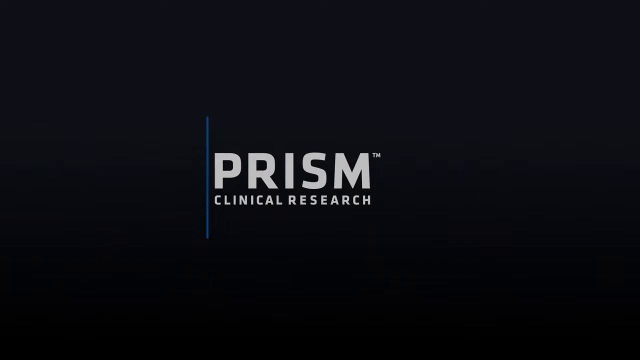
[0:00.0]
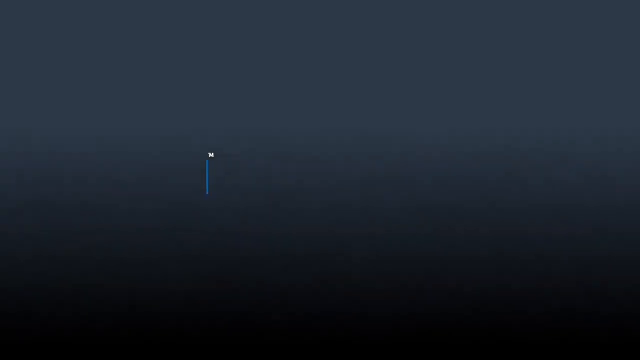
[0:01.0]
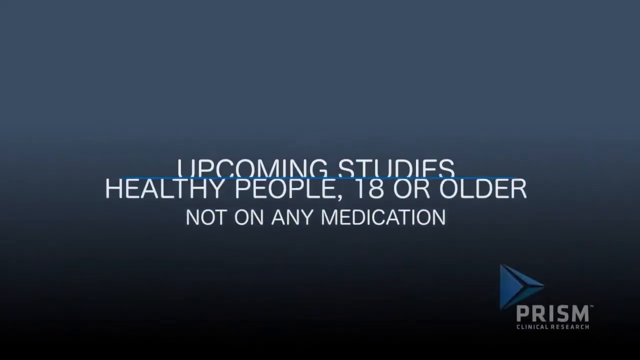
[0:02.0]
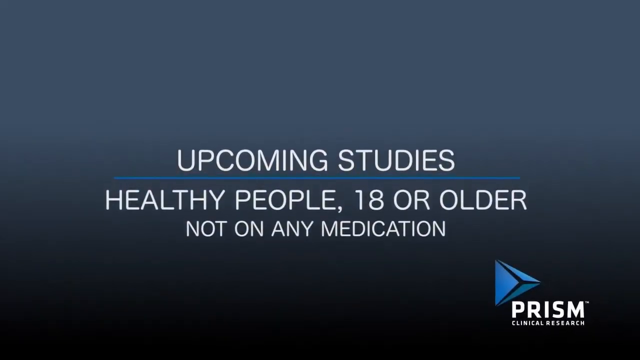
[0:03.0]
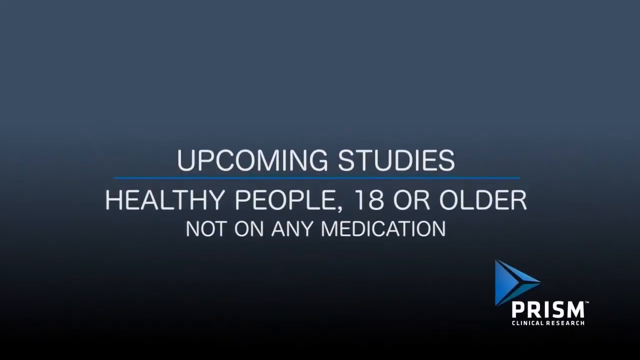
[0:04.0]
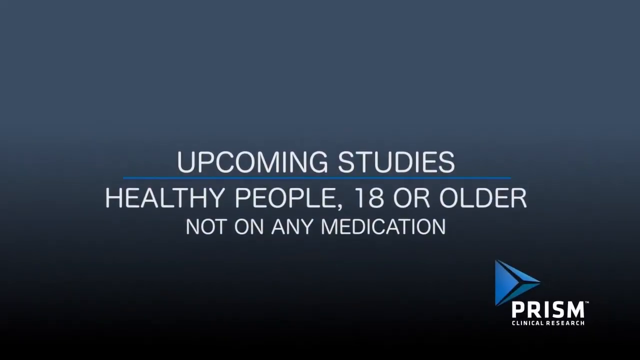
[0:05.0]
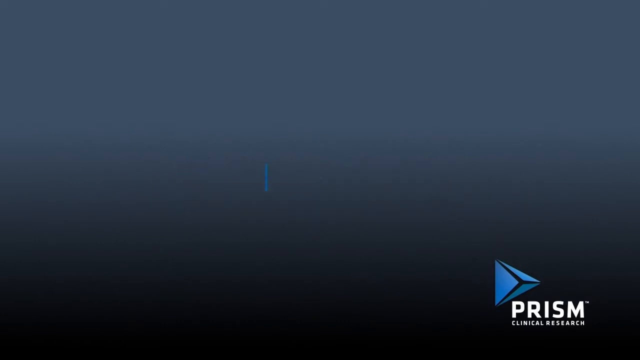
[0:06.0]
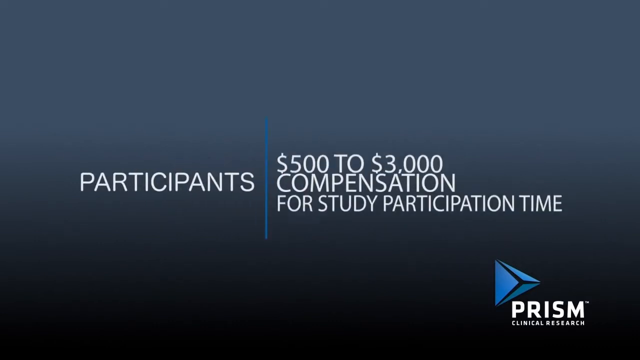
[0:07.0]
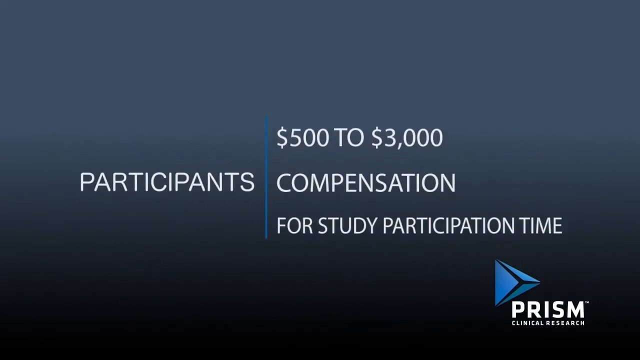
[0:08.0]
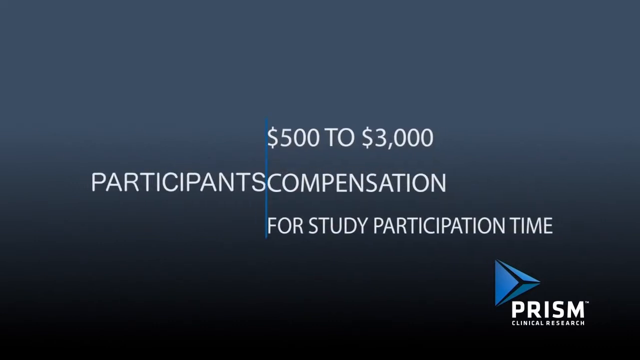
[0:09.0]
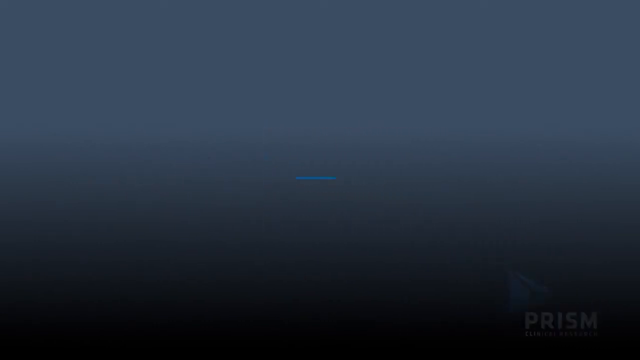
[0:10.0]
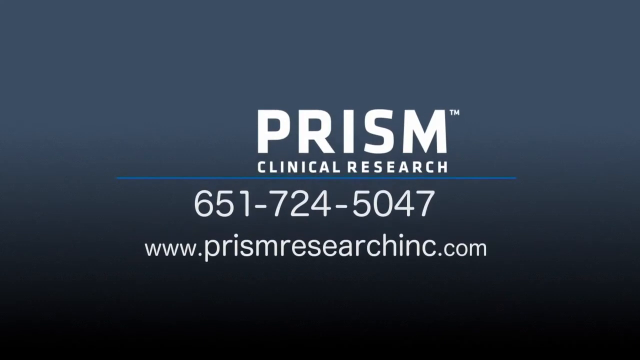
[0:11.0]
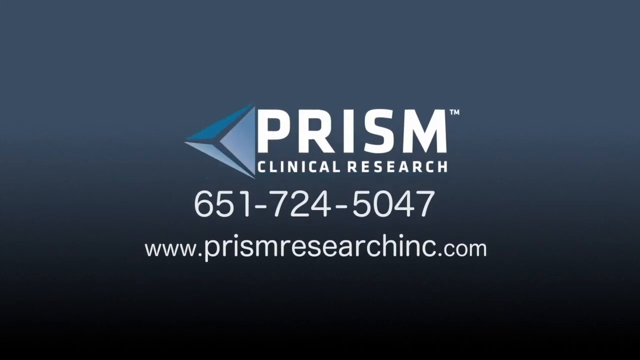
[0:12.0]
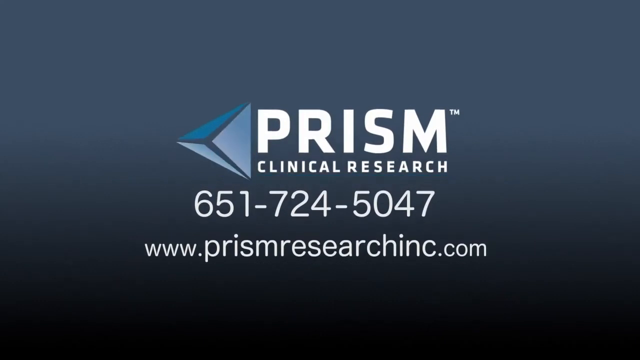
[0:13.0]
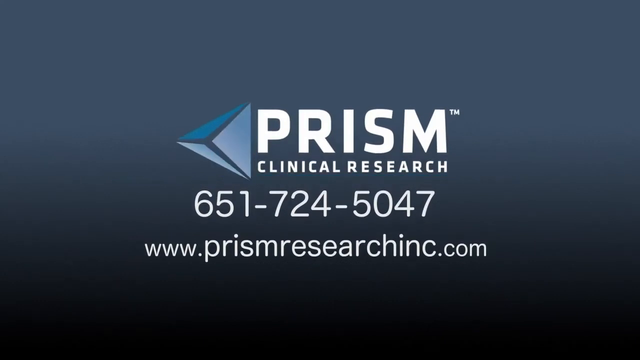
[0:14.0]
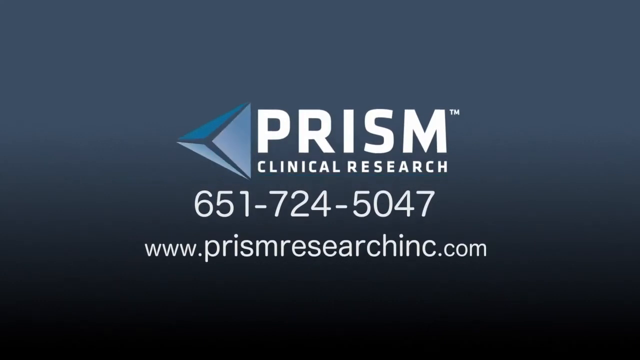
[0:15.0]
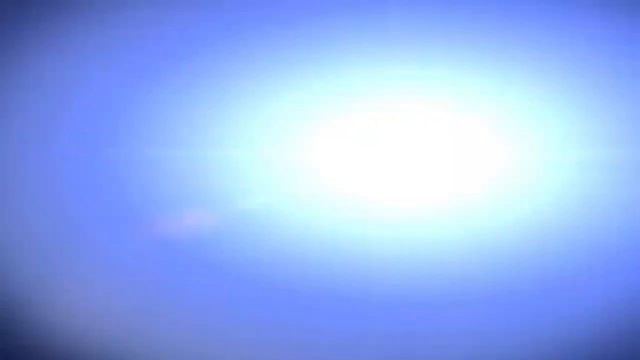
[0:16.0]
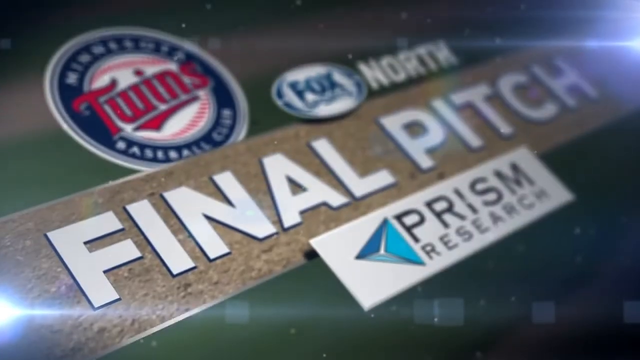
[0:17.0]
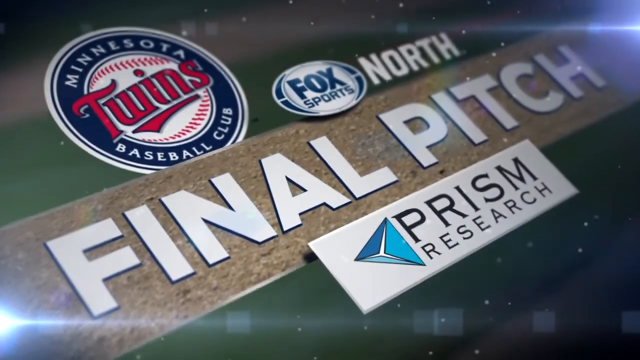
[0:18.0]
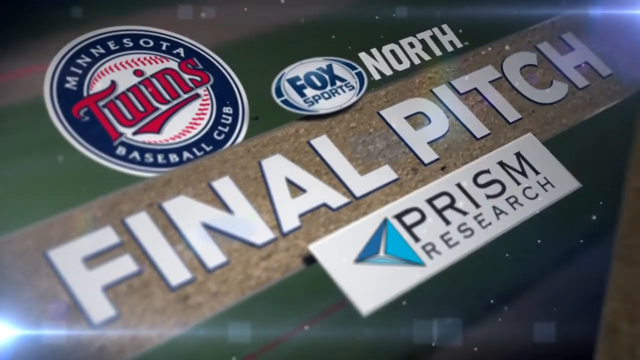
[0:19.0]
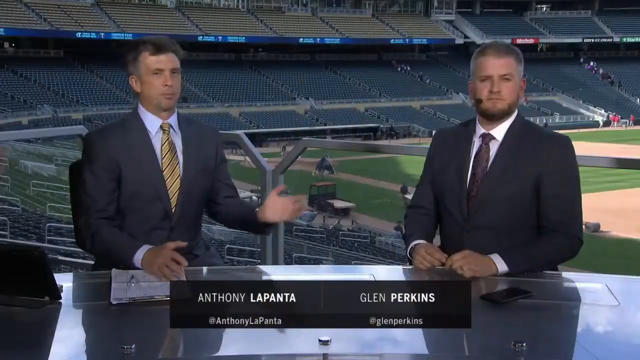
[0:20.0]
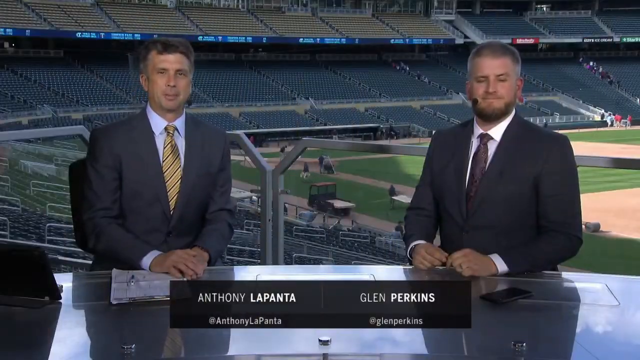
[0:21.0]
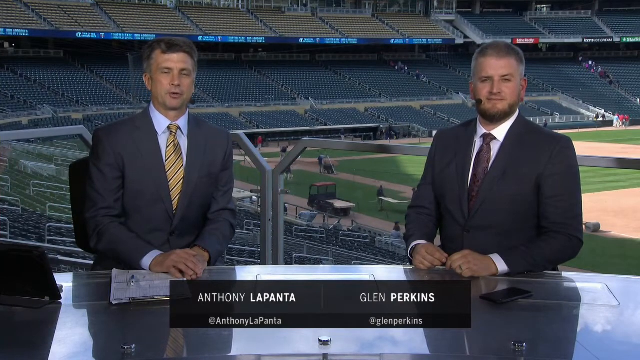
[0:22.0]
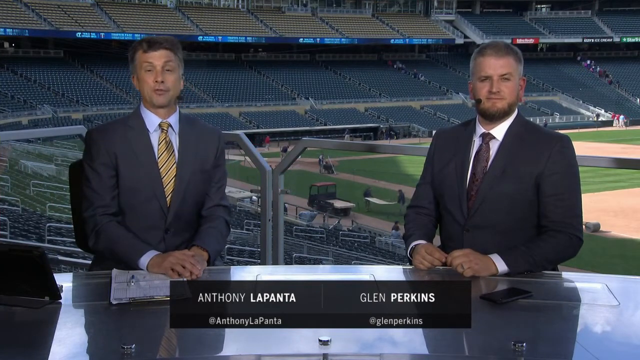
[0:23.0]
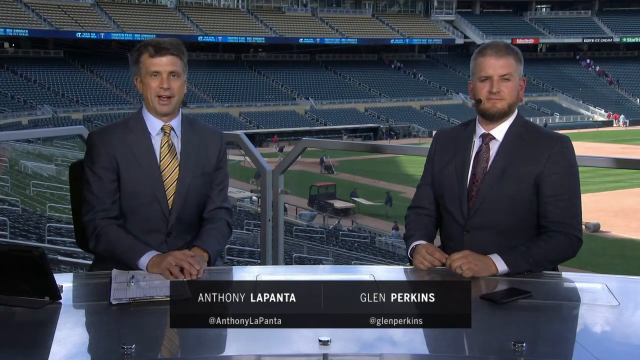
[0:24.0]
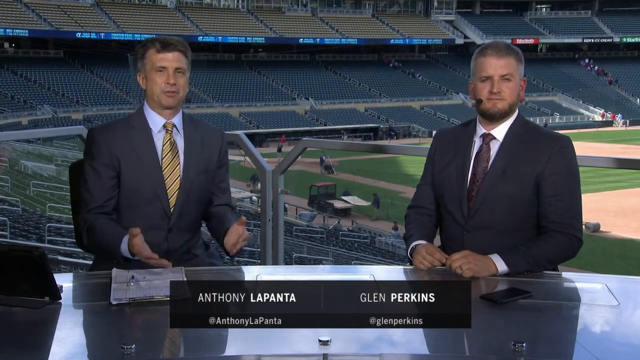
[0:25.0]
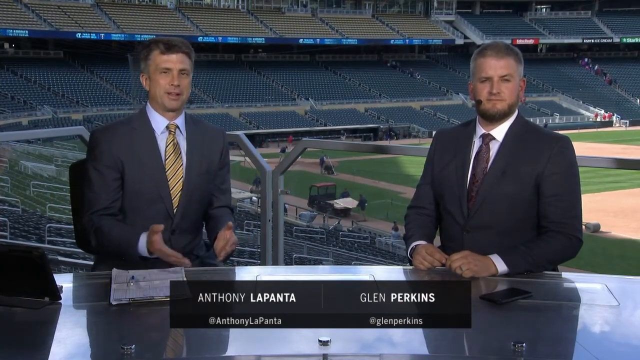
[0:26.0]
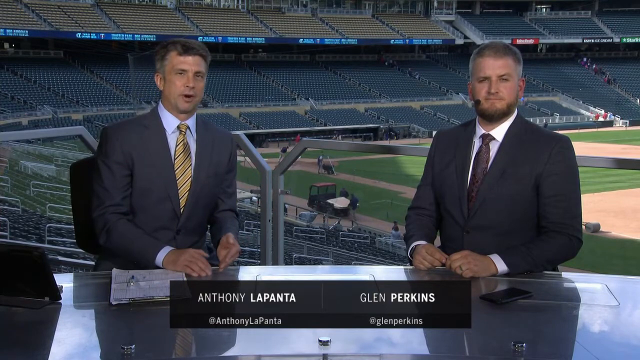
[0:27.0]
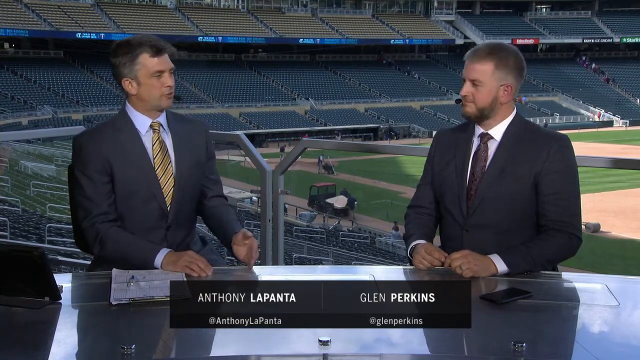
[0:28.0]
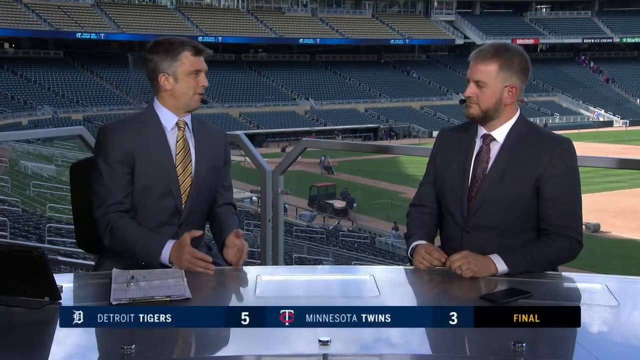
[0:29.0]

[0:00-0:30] The video begins with a title slide of white text on a black background, with the word "prism" in large font and the words "clinical research" just behind it. A small vertical blue line appears to the left of the text. The text swipes away and more text appears, listing upcoming studies. The words are underlined with a long horizontal blue line against a slate background and read "healthy people, 18 or older," with "not on any medication" underneath. The Prism Clinical Research logo appears in the lower right of the screen; it consists of three blue triangles pointing from left to right, approximately over the P in "prism." Next, the compensation for the study is listed: apparently between $500 and $3,000 for study participation time. This text appears in three vertically stacked lines to the right of the word "participants," which is vertically centered. The text swipes away to the center, and contact information, a website and a phone number for Prism Clinical Research appear on the screen along with the company logo. The video then changes, and the words "final pitch" appear diagonally. The Minnesota Twins logo appears in the upper left, the Fox Sports North logo to its right, and the Prism Research logo directly below it. The graphic rotates through three-dimensional space, and then two talking heads appear at the Minnesota stadium, plainly superimposed. They are named Anthony on the left and Clint on the right, and both wear suits.